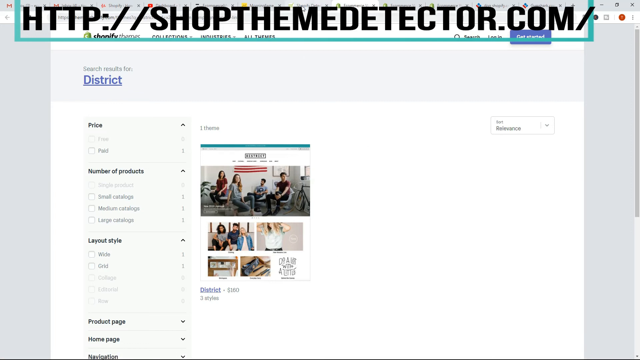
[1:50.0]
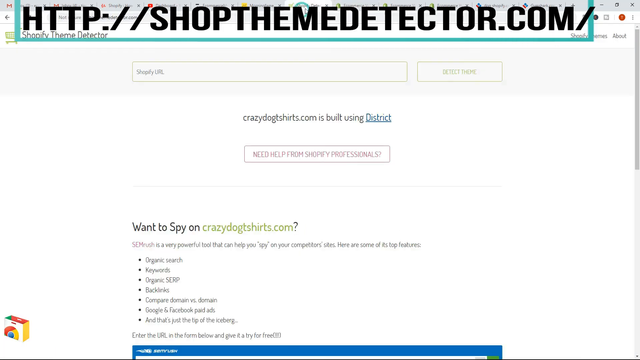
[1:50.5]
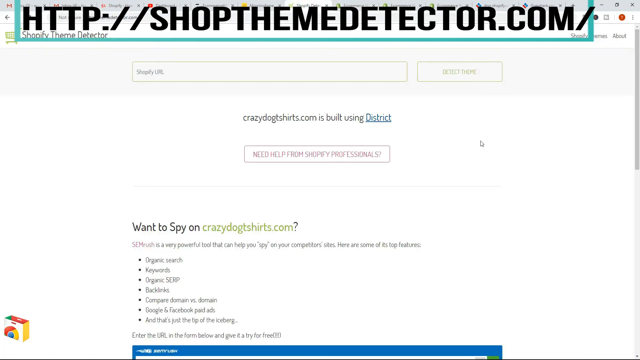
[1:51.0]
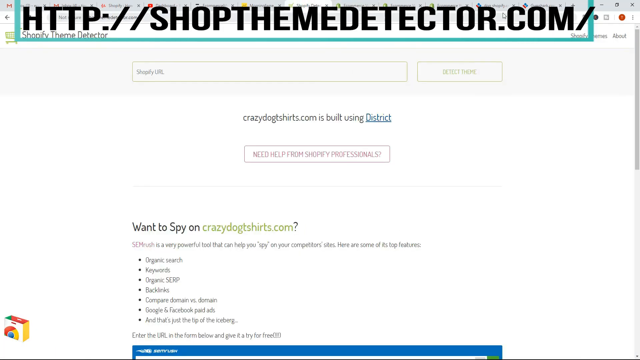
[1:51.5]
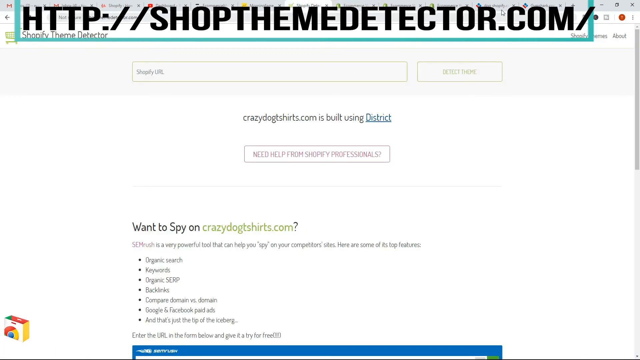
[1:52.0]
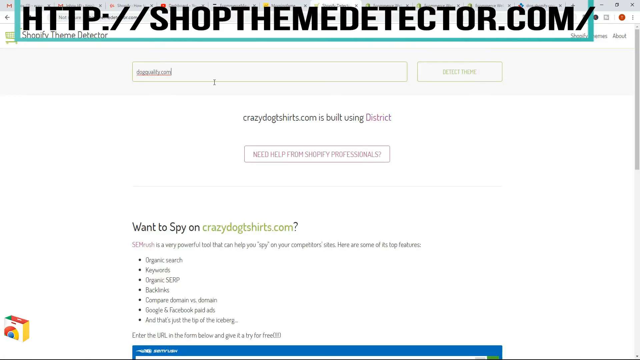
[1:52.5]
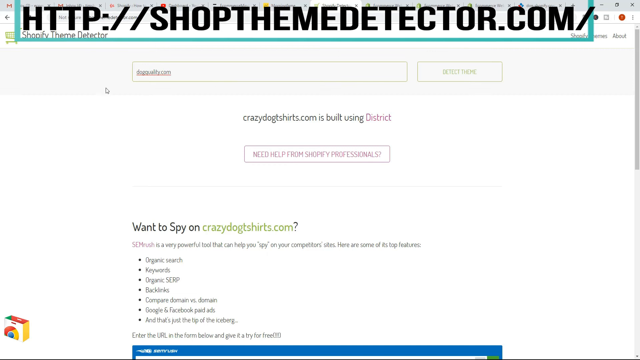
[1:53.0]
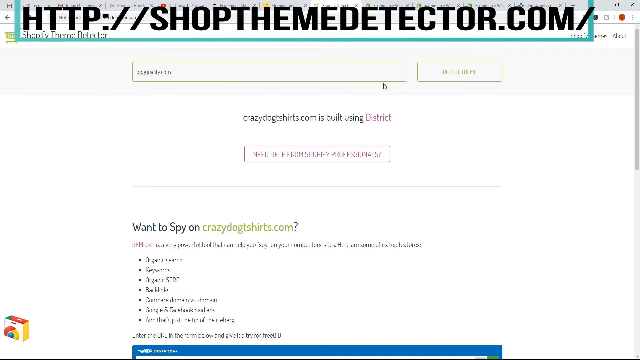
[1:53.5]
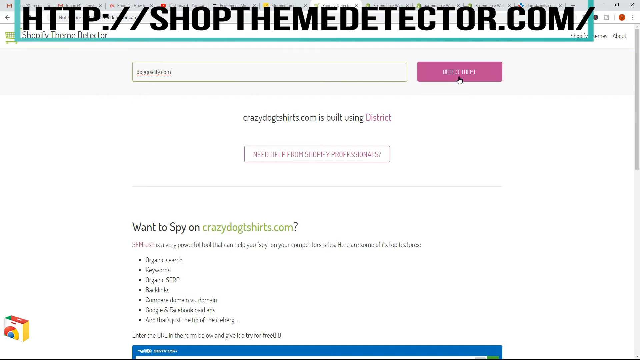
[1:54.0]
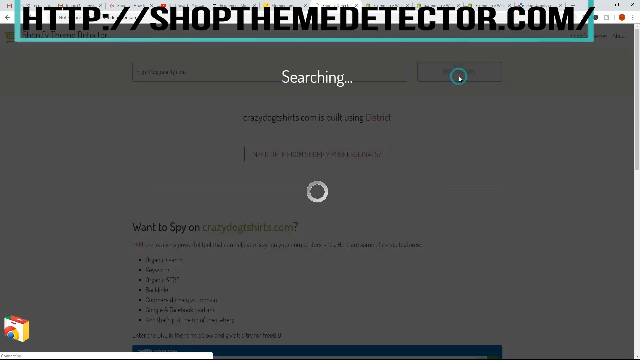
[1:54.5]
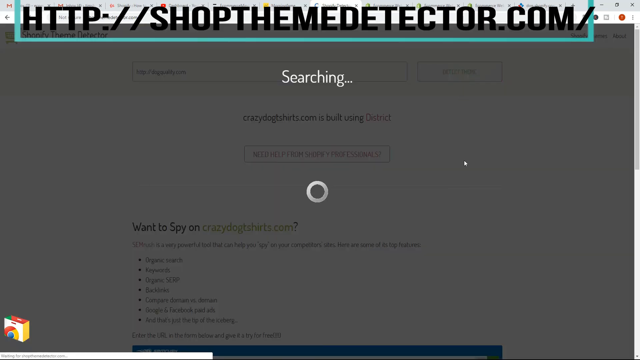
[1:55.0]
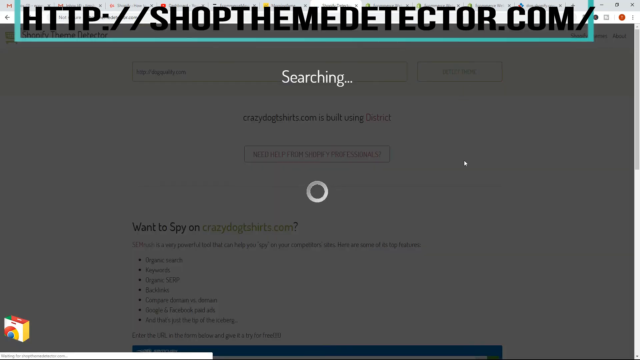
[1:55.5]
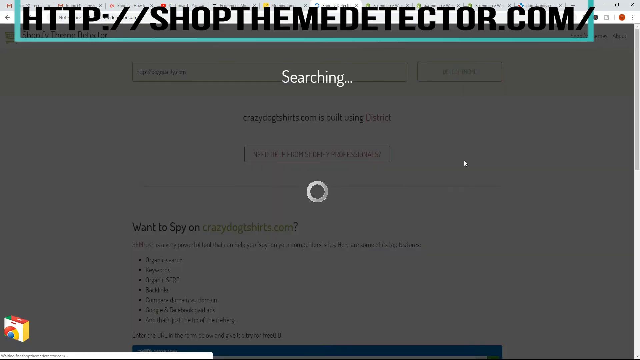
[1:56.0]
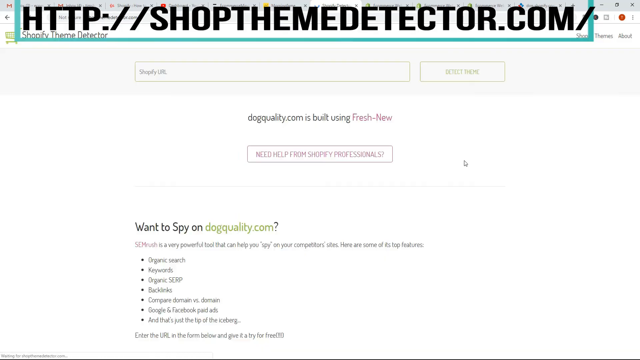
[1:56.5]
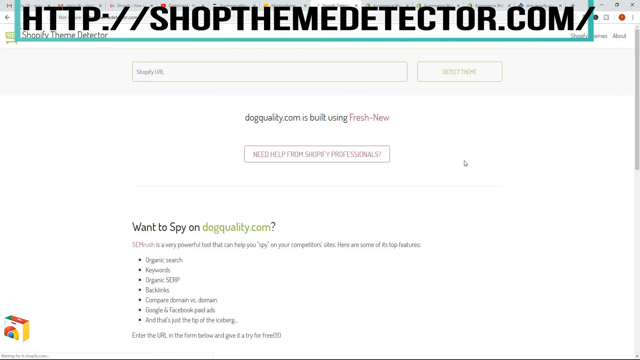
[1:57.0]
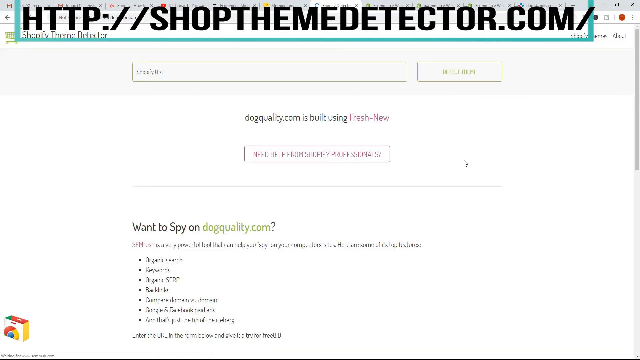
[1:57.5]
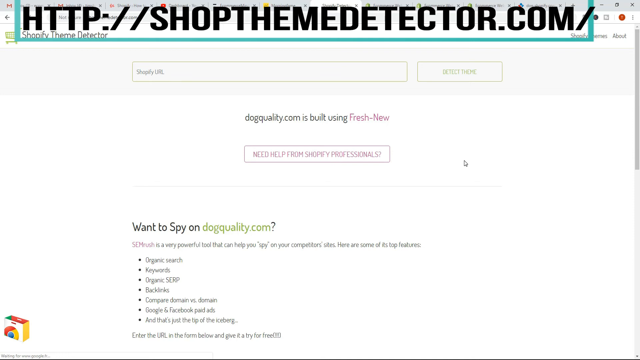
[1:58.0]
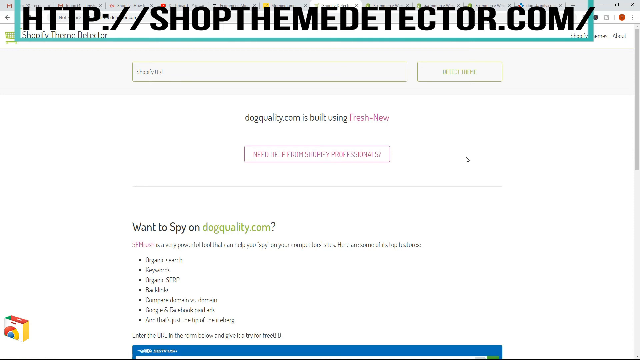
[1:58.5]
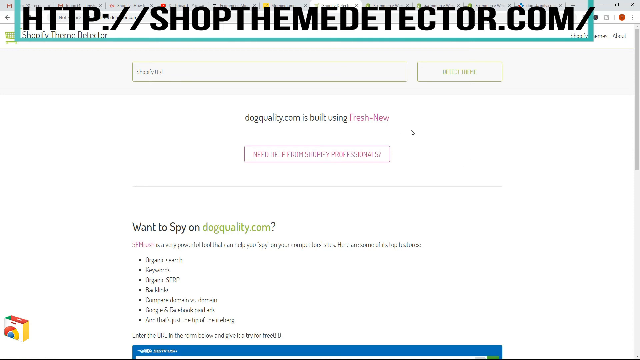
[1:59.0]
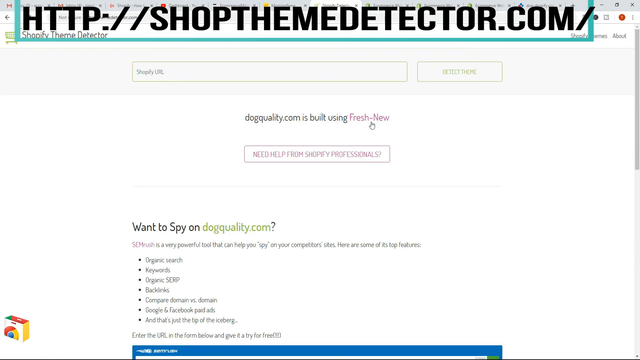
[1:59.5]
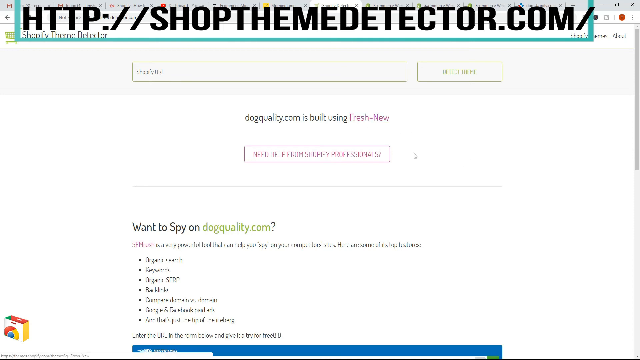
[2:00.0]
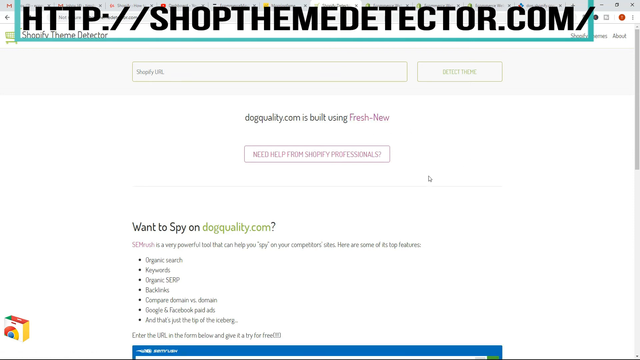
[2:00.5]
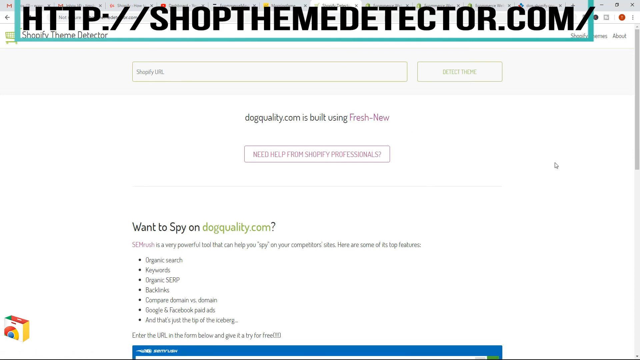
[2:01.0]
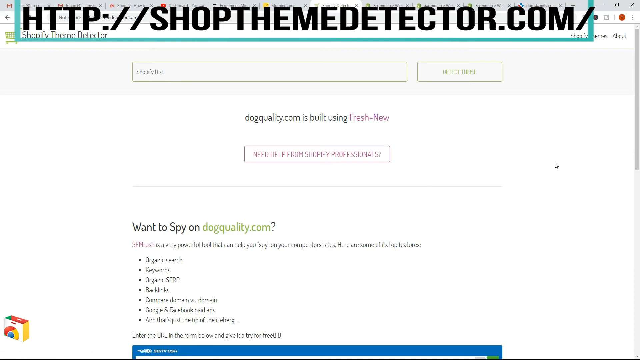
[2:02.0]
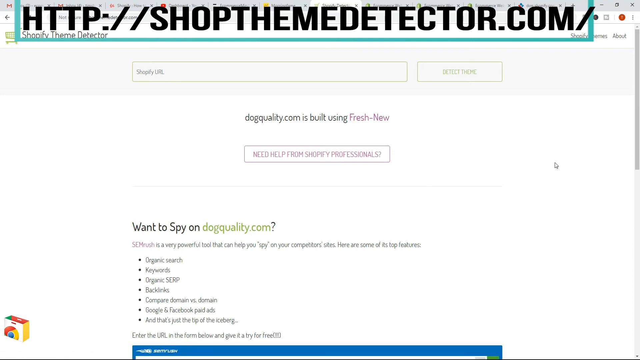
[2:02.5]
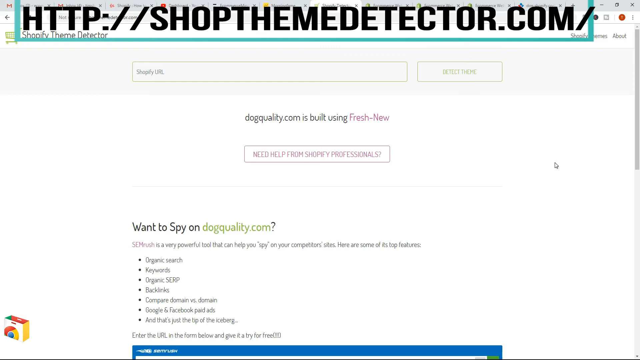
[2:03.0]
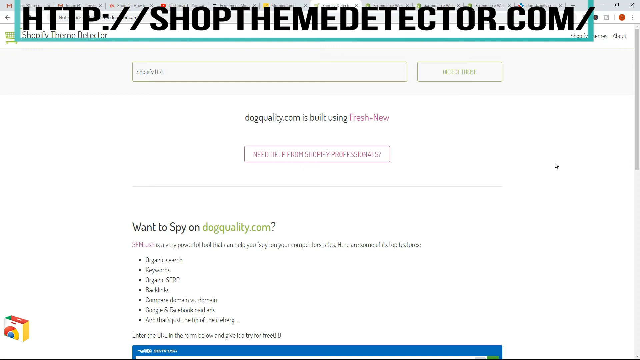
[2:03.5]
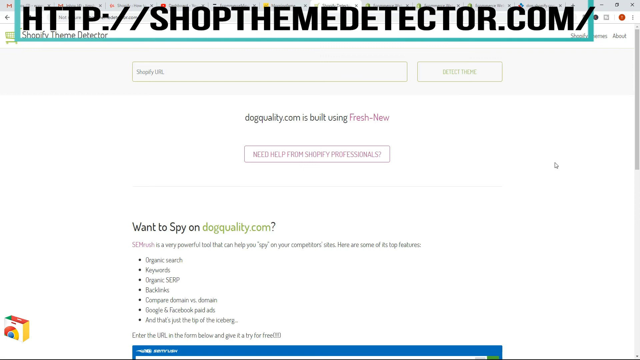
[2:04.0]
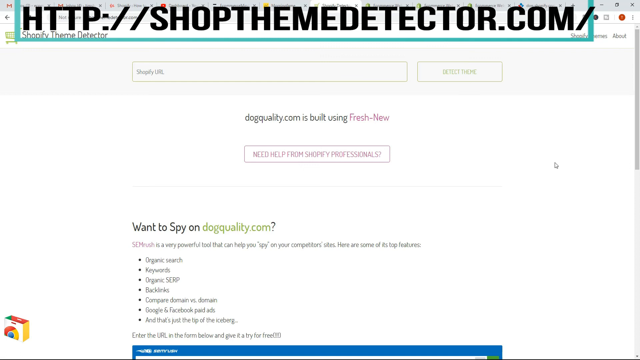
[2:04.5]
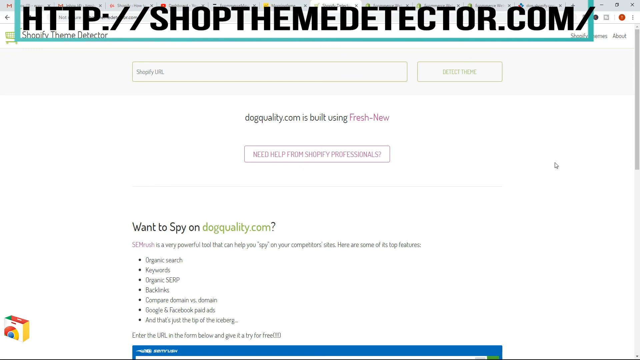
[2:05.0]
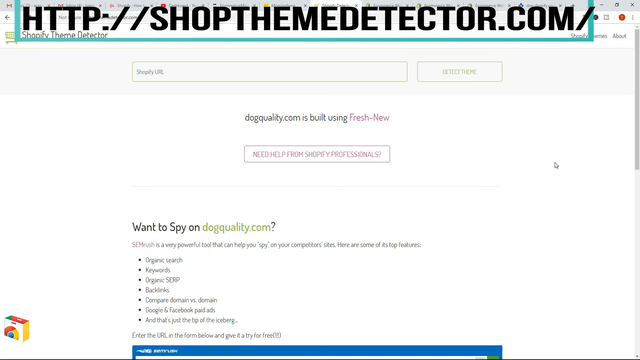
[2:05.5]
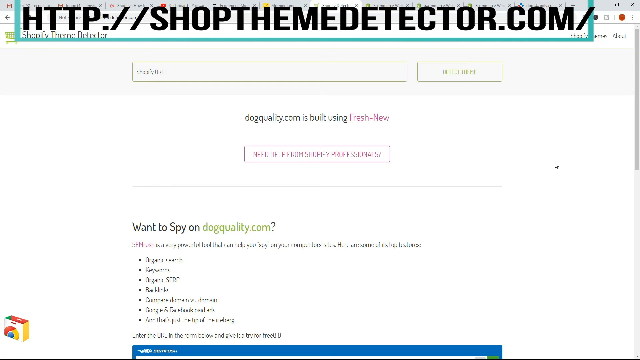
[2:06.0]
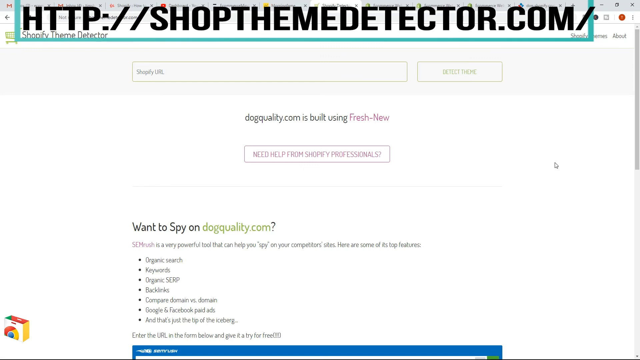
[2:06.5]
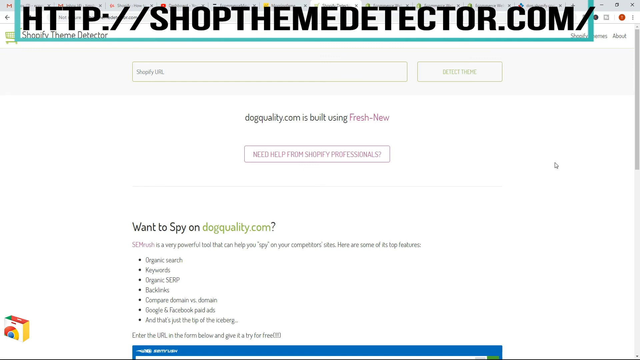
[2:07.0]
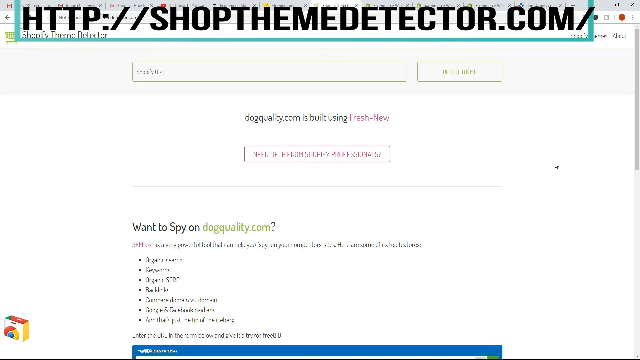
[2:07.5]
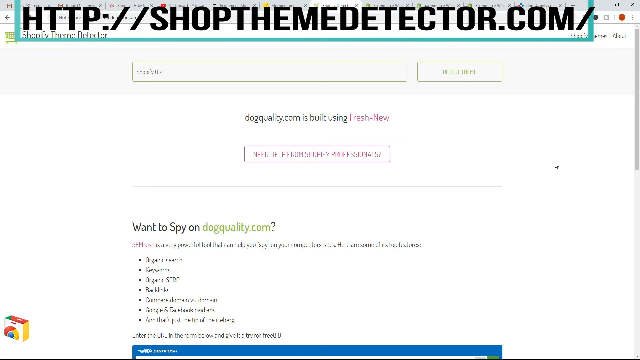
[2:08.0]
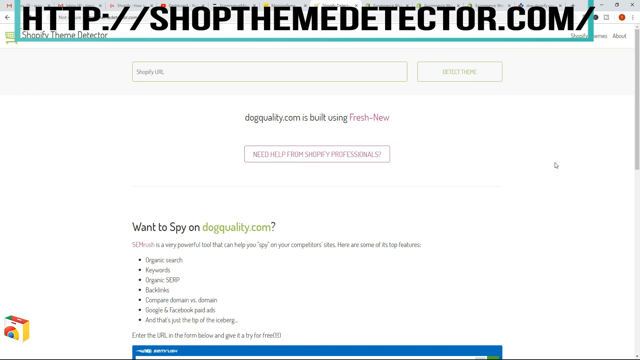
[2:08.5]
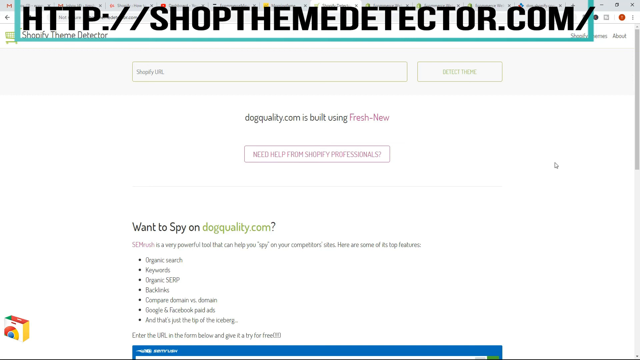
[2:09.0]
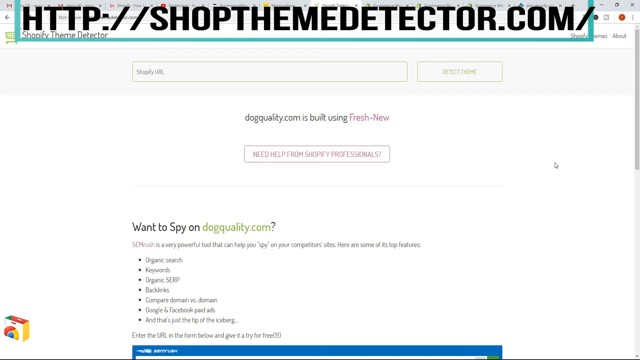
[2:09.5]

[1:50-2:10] The search term district is still shown, and then it is changed to fresh and new. The page is at shopthemedetector.com.